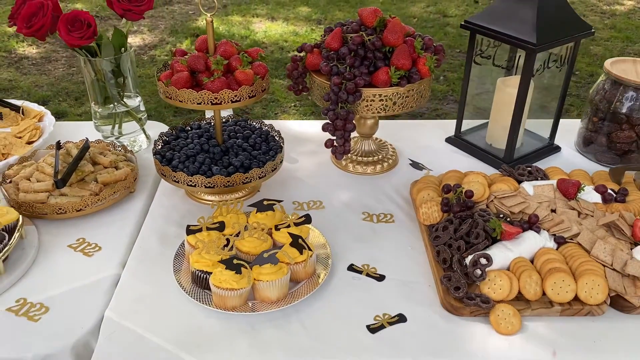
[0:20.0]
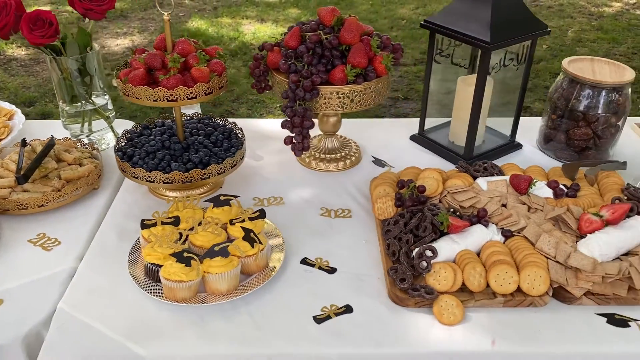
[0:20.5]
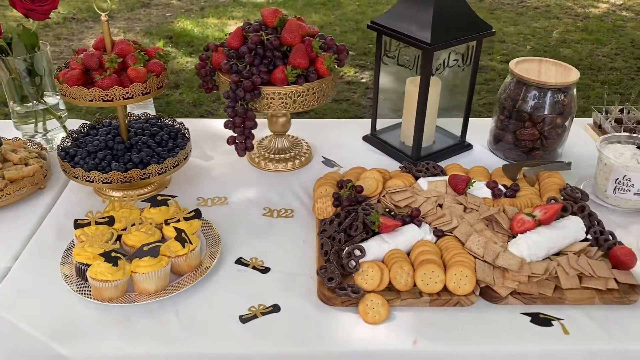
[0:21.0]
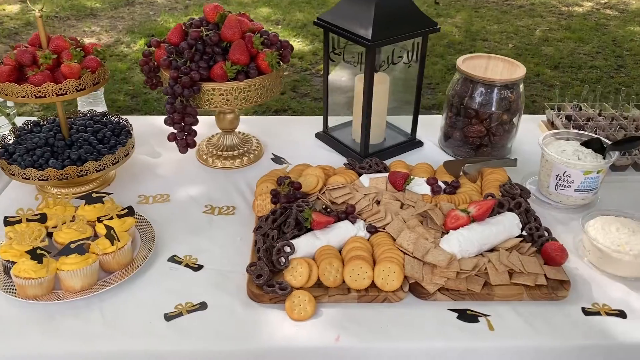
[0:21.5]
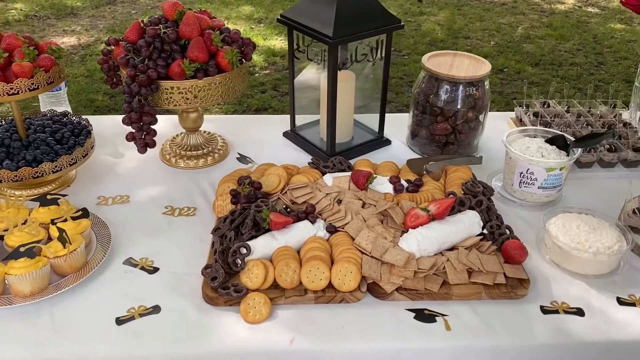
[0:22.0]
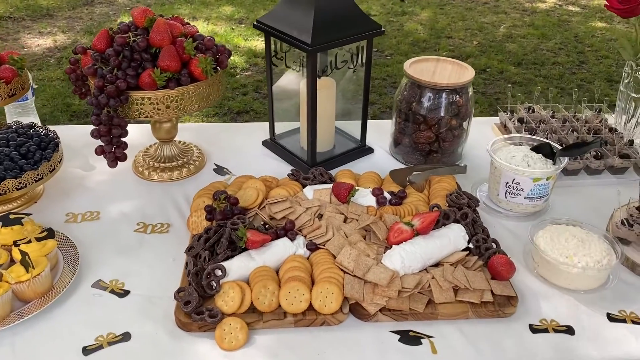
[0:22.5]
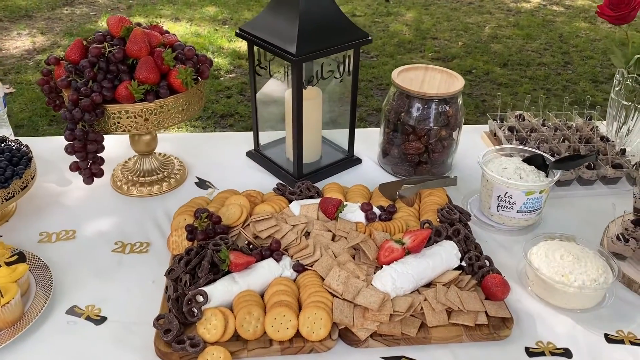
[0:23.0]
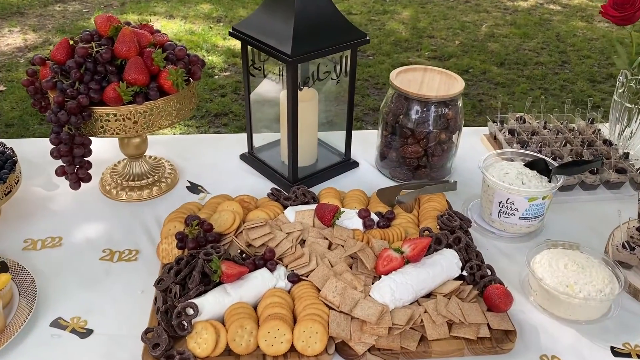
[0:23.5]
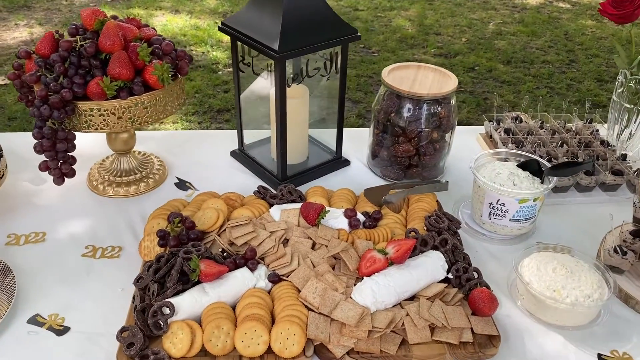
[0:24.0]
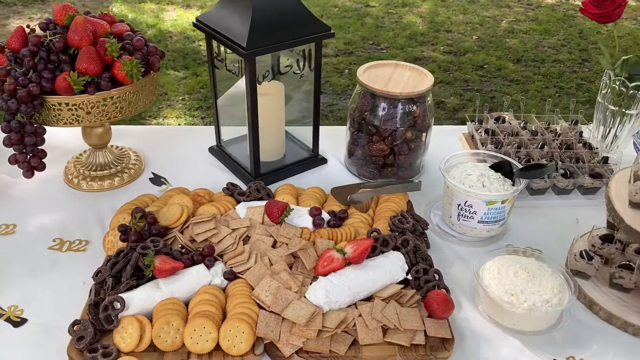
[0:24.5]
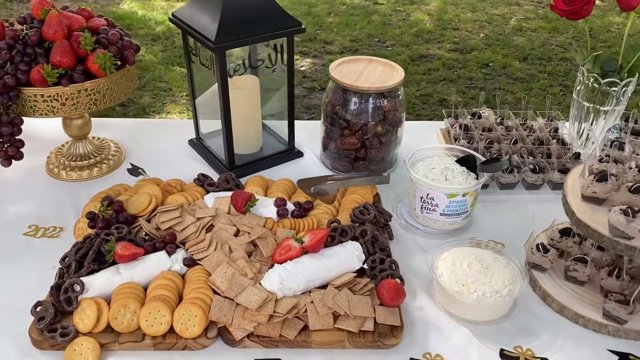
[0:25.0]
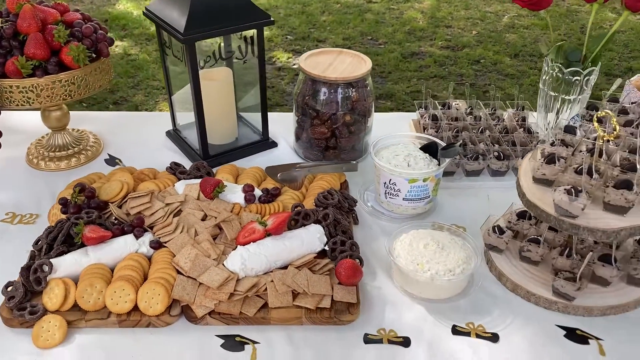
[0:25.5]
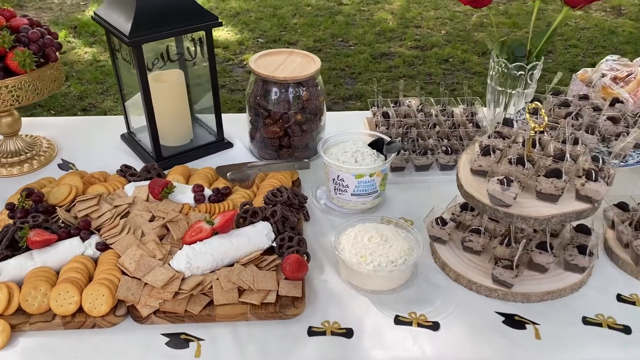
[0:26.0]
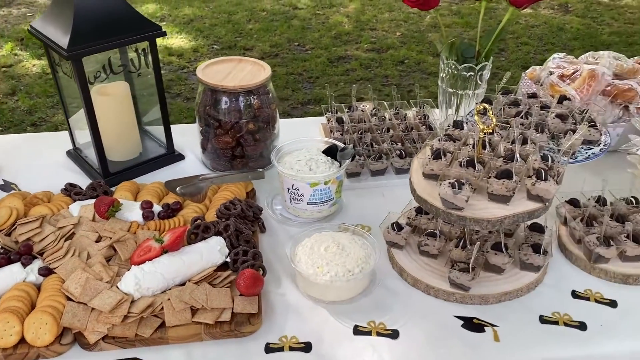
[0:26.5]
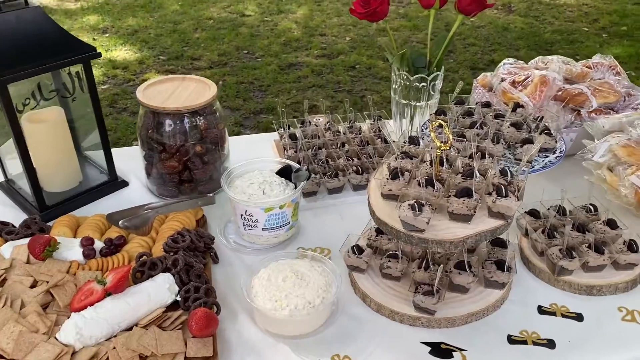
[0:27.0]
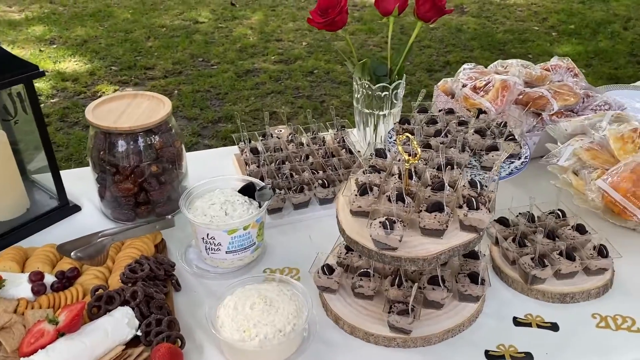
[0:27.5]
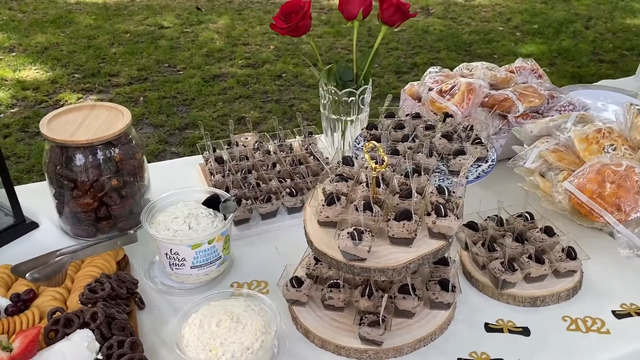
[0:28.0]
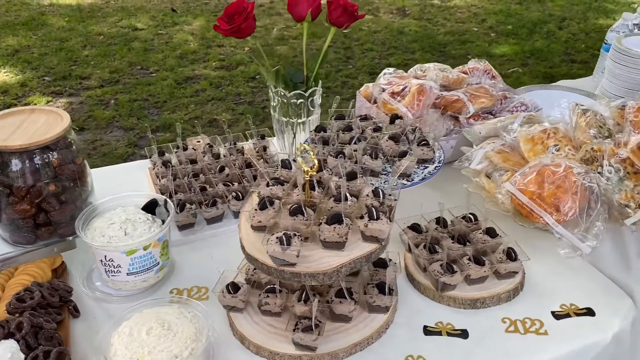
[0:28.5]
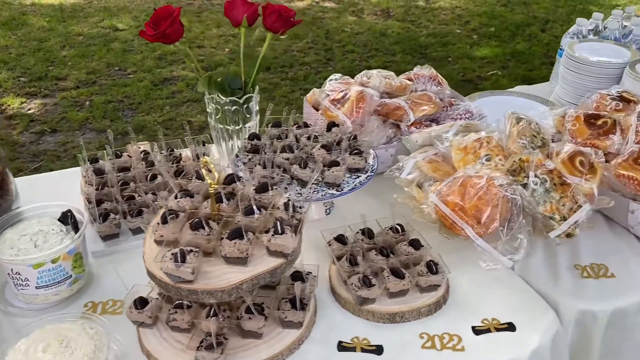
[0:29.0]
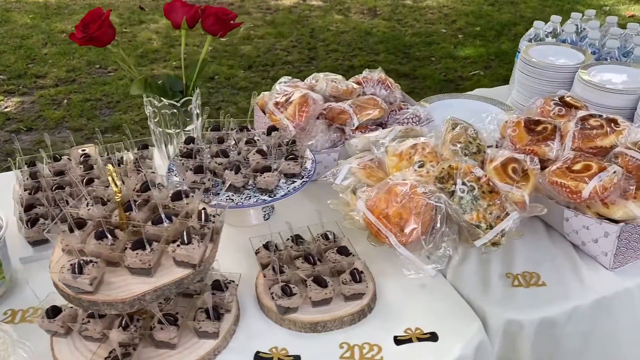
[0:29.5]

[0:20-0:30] The view turns to what looks like the desserts. Strawberries and blueberries are in gold carriers, kind of dessert trays. There are yellow cupcakes with yellow frosting topped with little black graduation caps. There is what looks like chocolate-covered pretzels, crackers, what looks like a cheese loaf, and some kinds of dips for the fruit. There also appear to be different kinds of desserts, possibly cookies and cream, along with more pastries and what looks like some kinds of cakes. Other kinds of flowers are in the back.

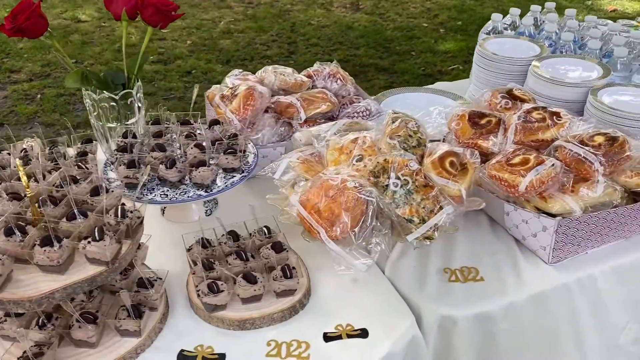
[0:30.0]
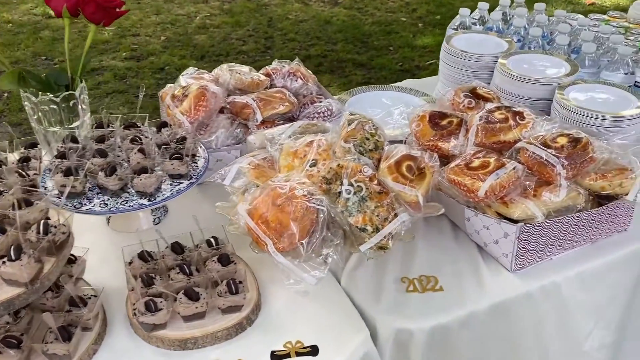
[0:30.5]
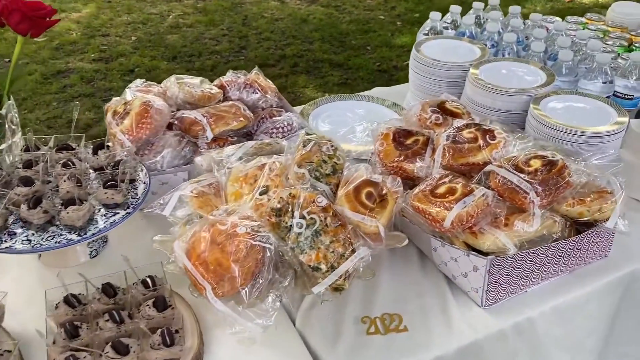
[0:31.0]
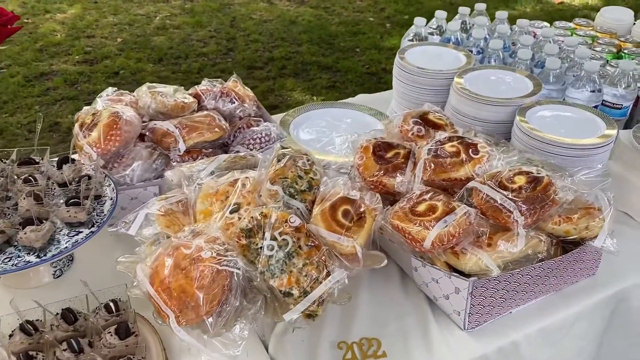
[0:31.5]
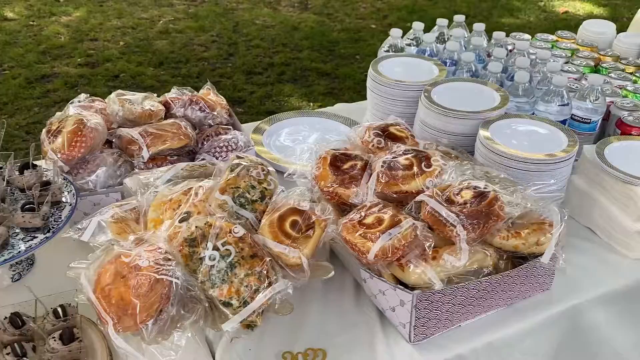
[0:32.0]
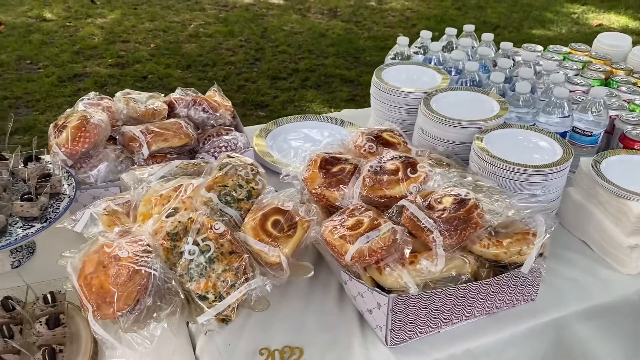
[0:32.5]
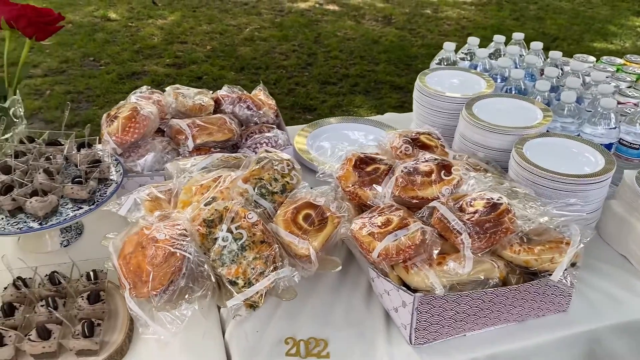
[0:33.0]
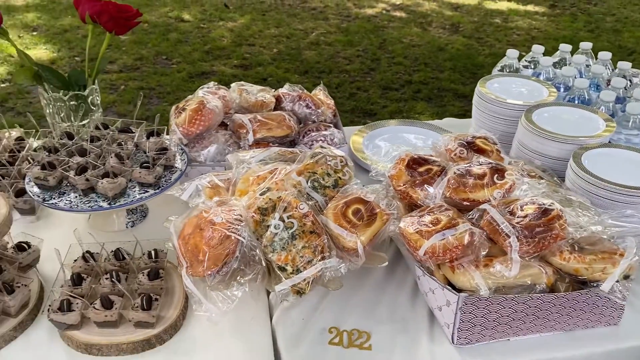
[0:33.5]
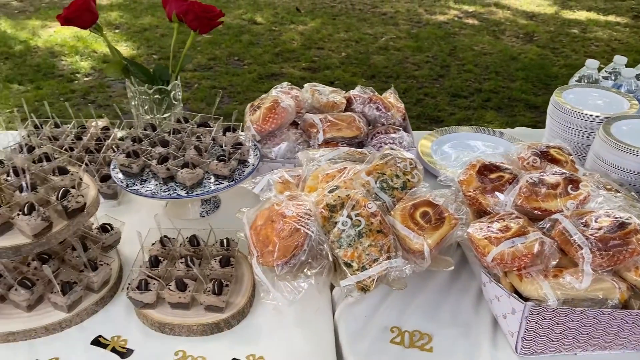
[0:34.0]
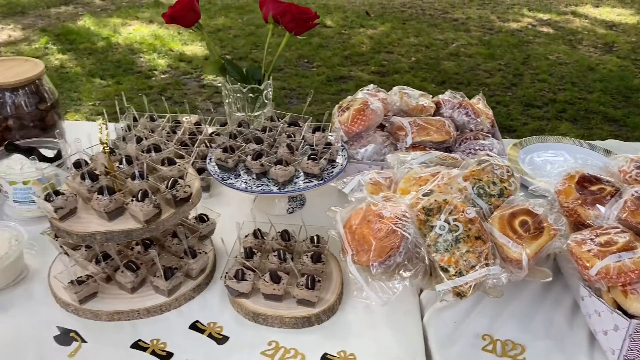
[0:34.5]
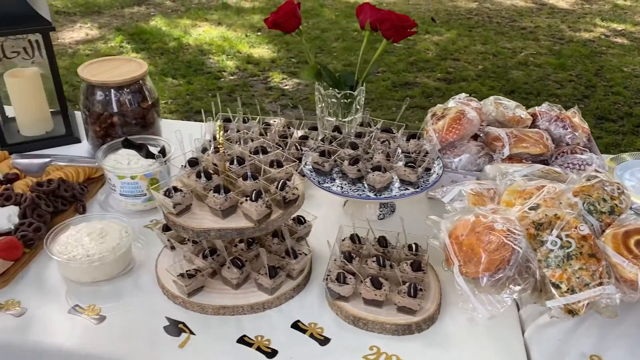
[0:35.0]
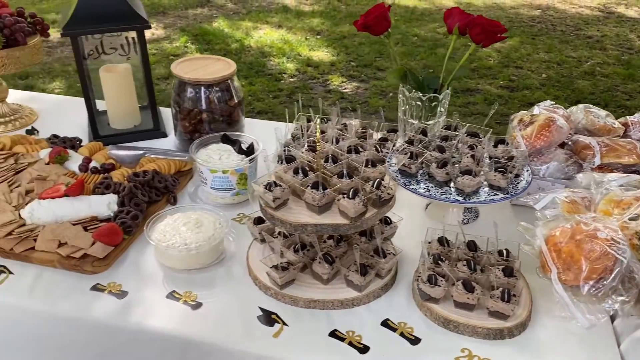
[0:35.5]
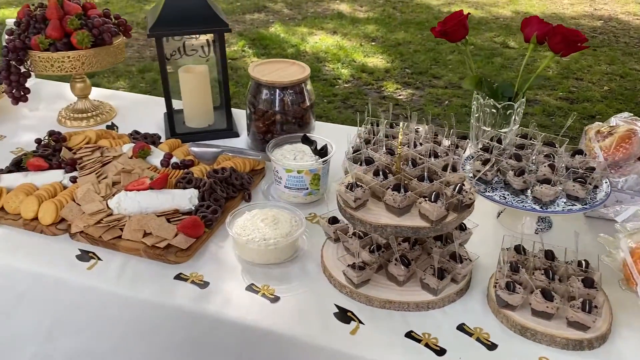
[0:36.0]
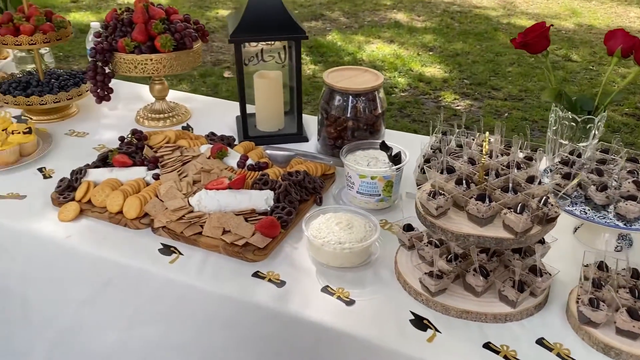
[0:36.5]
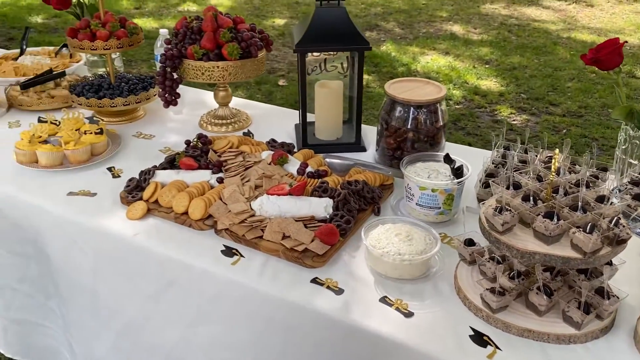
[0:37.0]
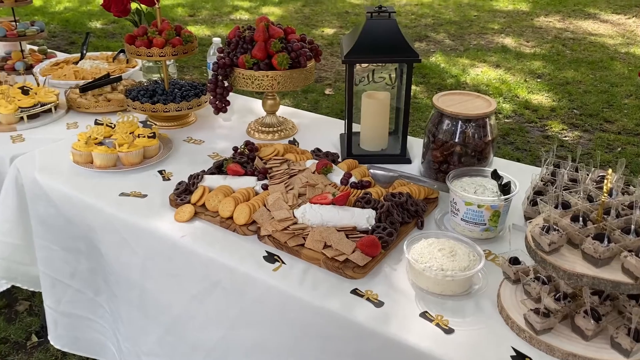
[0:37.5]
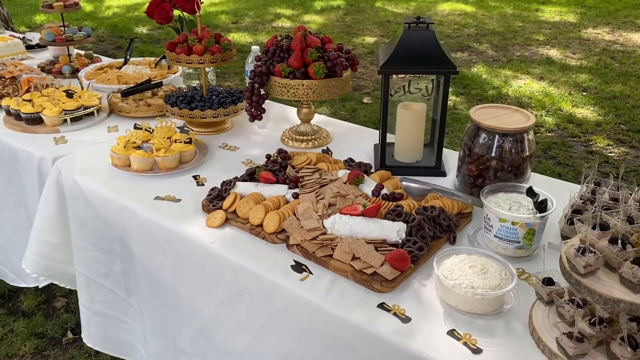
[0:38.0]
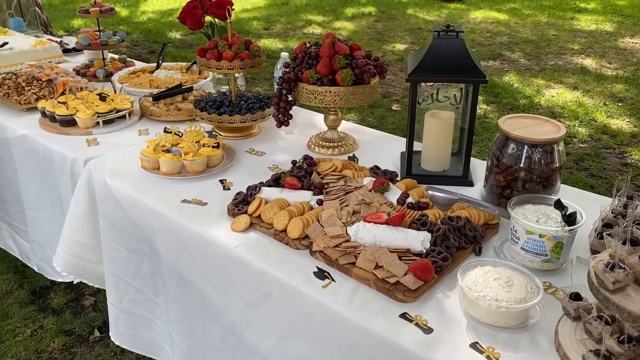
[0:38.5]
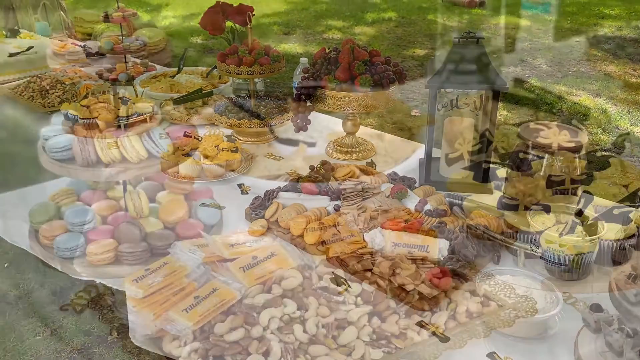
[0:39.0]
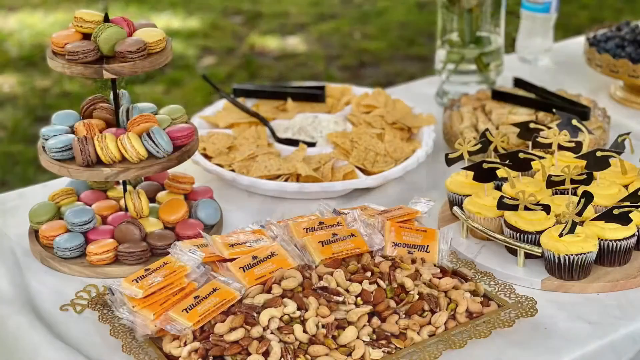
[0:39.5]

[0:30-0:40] The table holds a lot of pastries, different kinds of delicacies, nuts, plates, and many different waters and drinks, apparently including some sodas, along with many decorations. Quite a few decorations point to a graduation: cap and gown decorations are spread throughout the table. The year is shown as 2022. What look to be candle holders are also spread throughout the table.